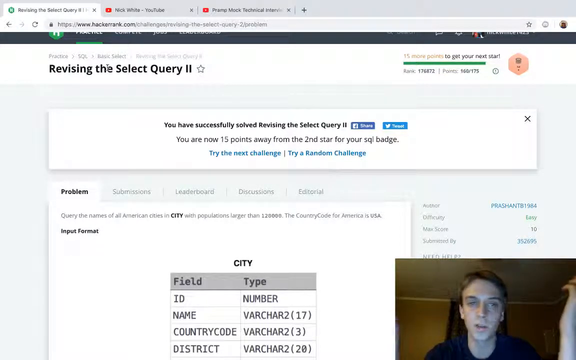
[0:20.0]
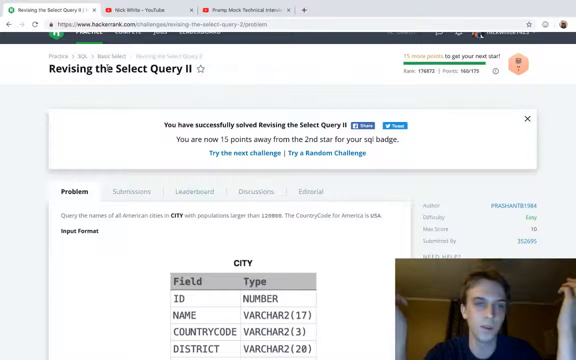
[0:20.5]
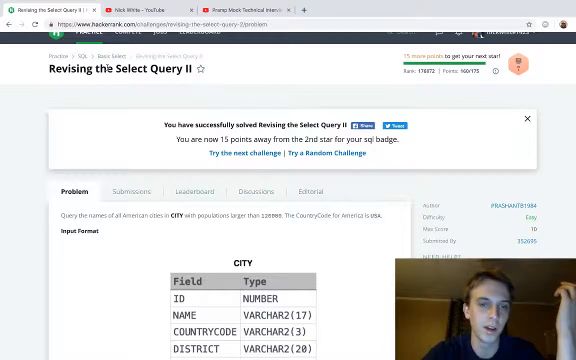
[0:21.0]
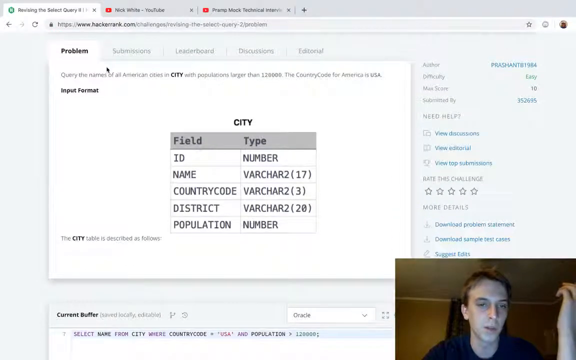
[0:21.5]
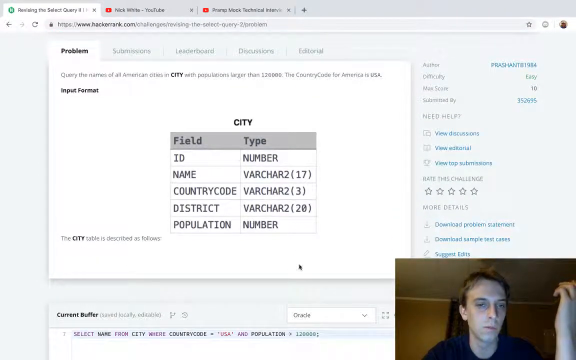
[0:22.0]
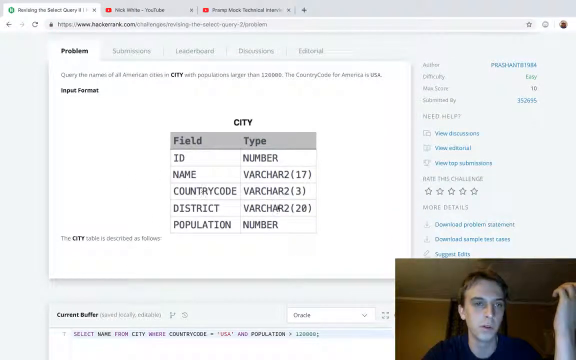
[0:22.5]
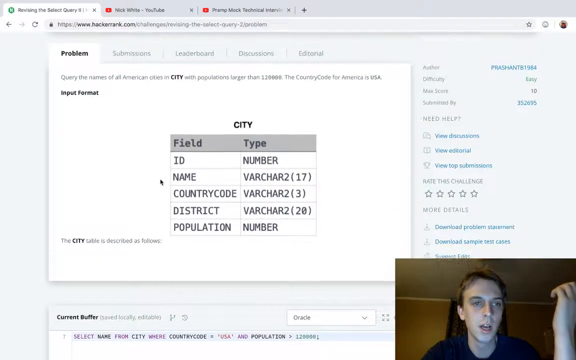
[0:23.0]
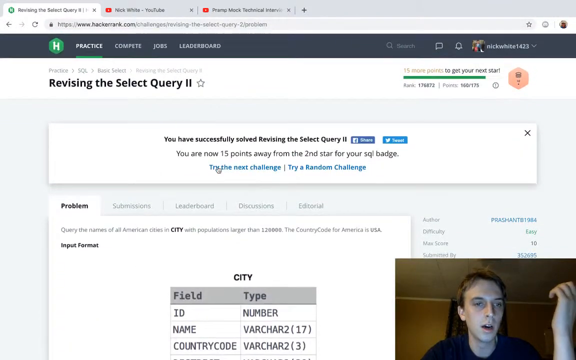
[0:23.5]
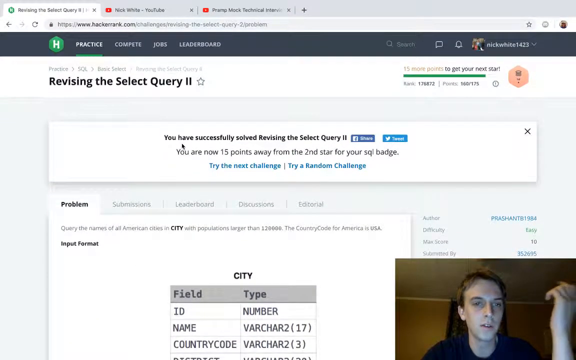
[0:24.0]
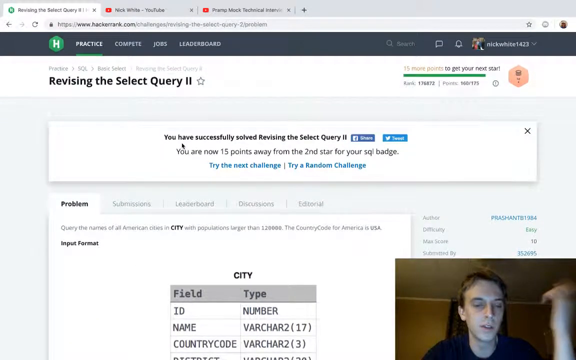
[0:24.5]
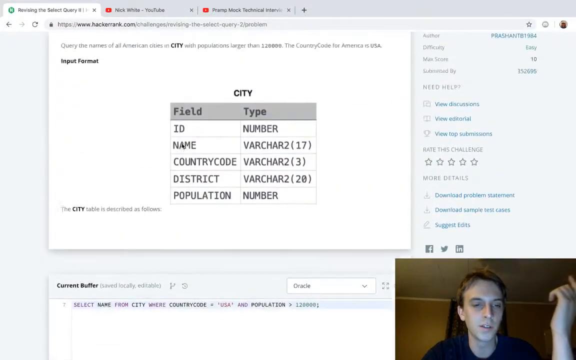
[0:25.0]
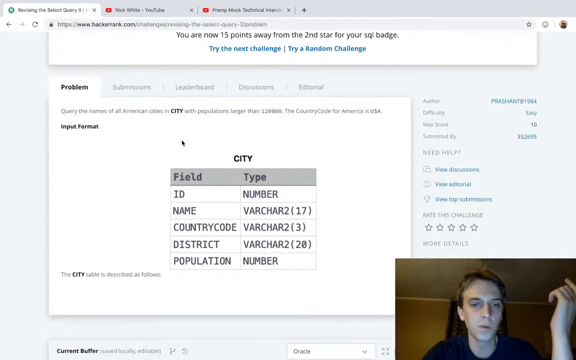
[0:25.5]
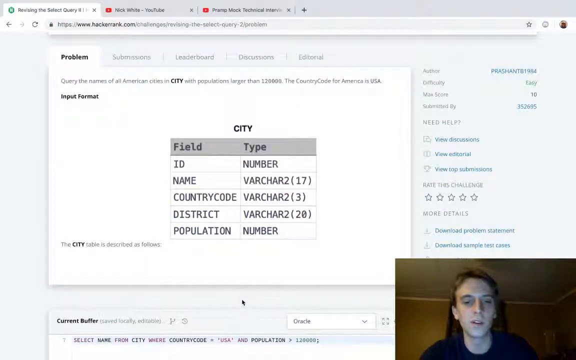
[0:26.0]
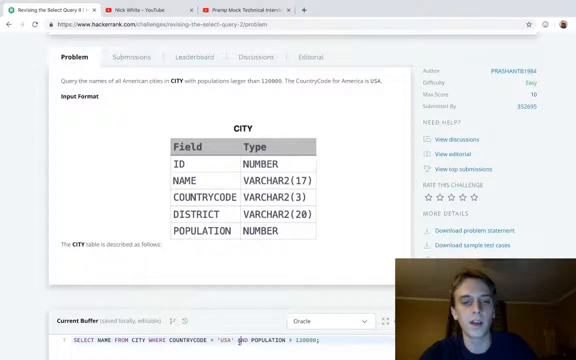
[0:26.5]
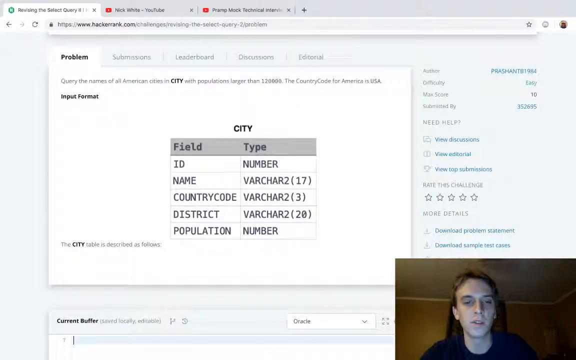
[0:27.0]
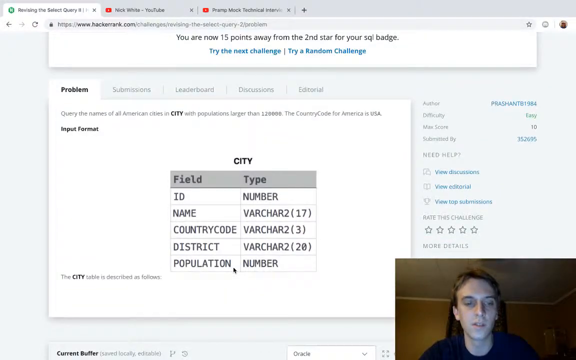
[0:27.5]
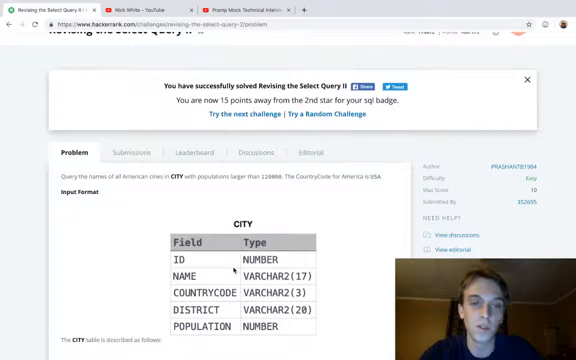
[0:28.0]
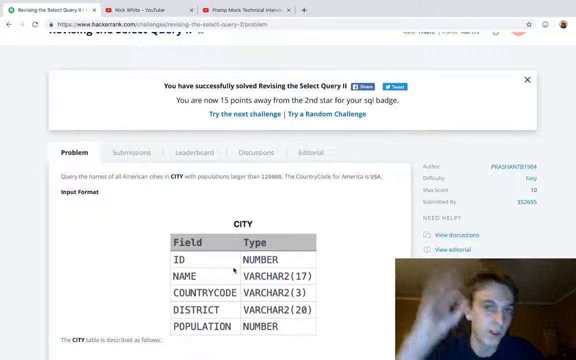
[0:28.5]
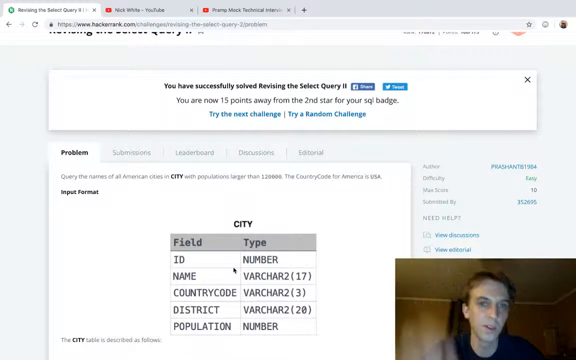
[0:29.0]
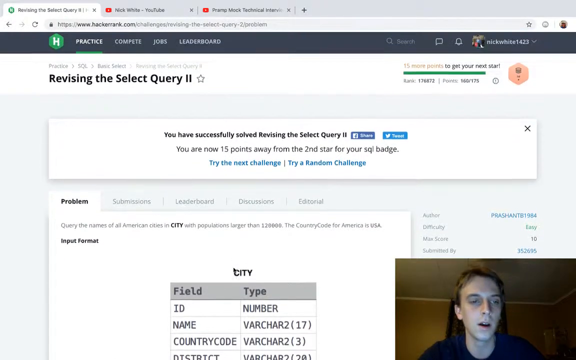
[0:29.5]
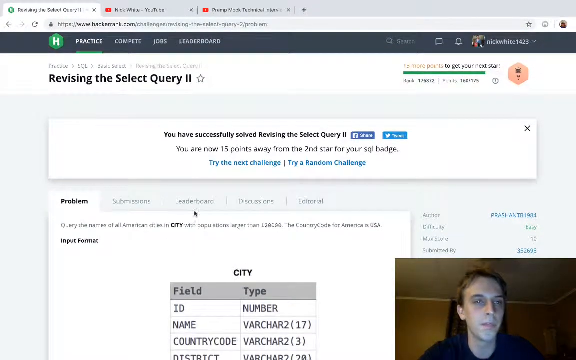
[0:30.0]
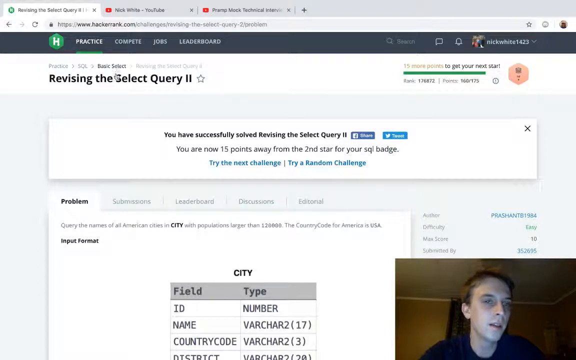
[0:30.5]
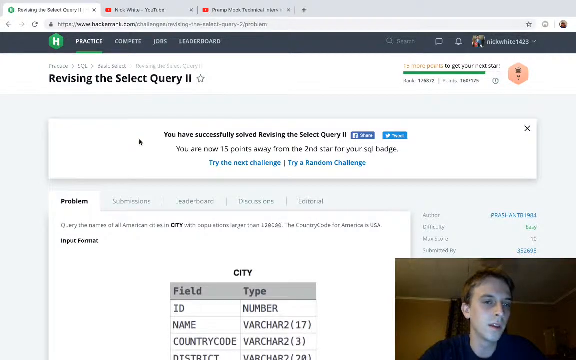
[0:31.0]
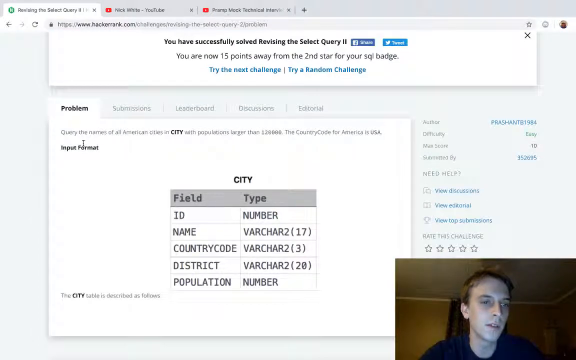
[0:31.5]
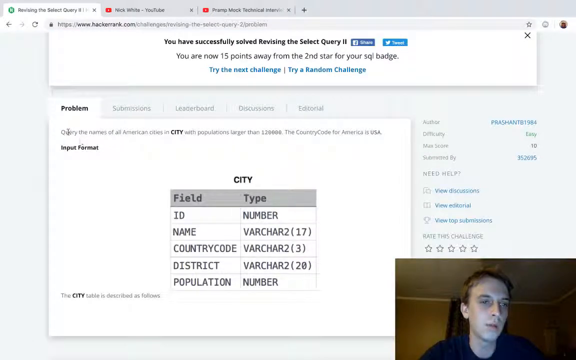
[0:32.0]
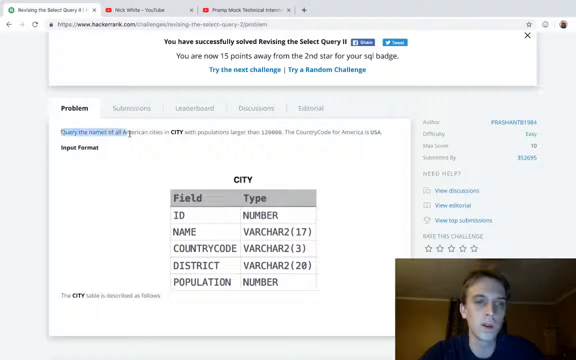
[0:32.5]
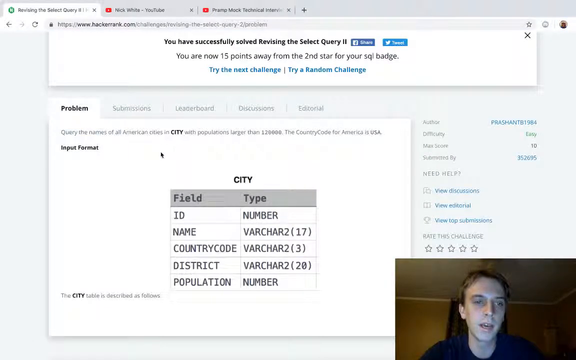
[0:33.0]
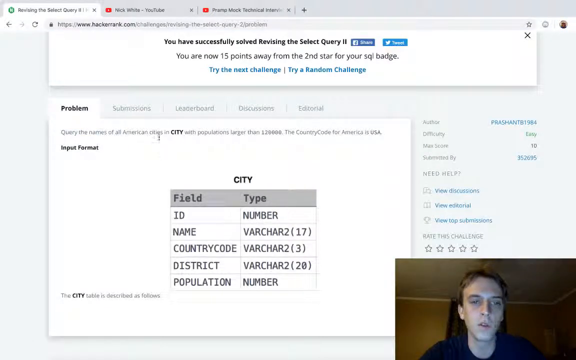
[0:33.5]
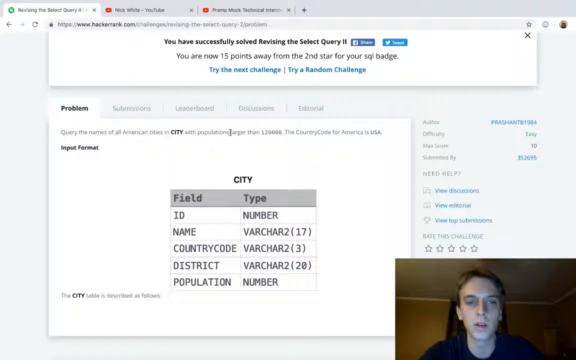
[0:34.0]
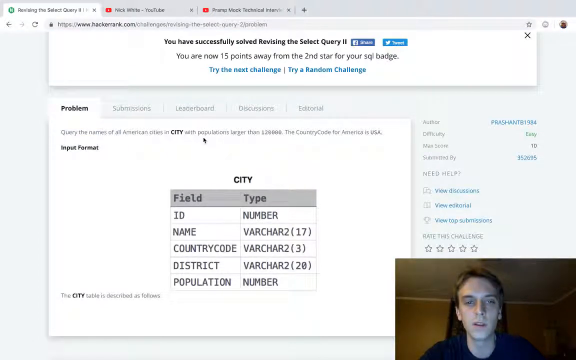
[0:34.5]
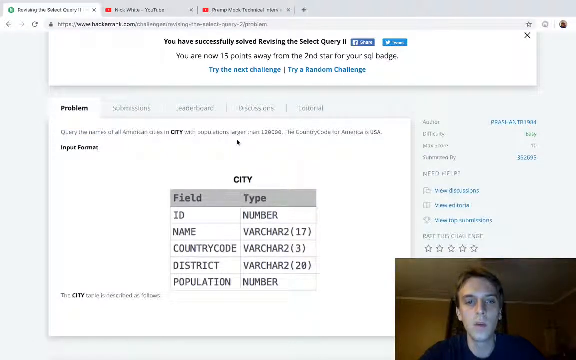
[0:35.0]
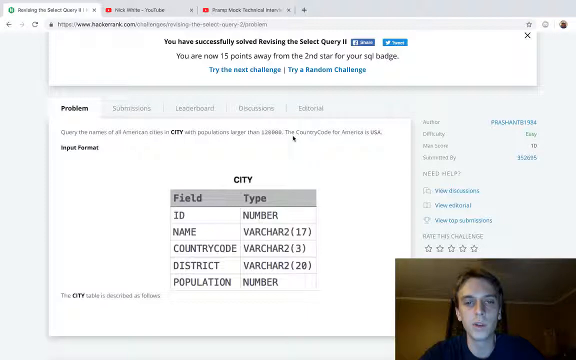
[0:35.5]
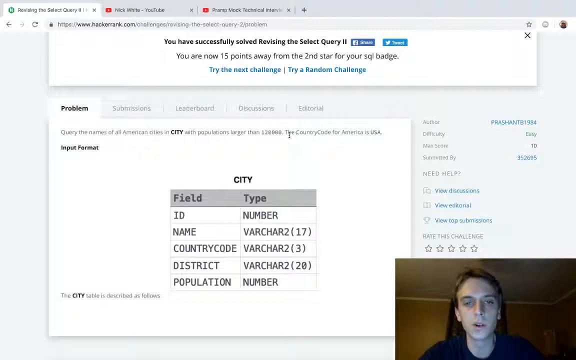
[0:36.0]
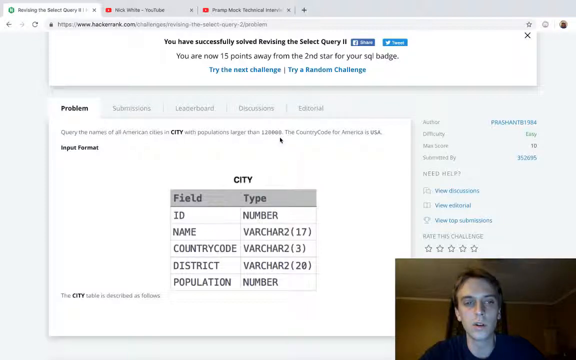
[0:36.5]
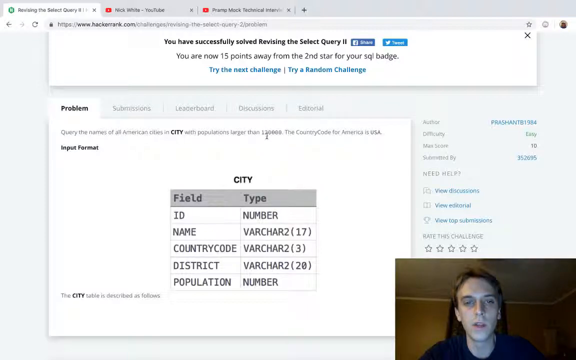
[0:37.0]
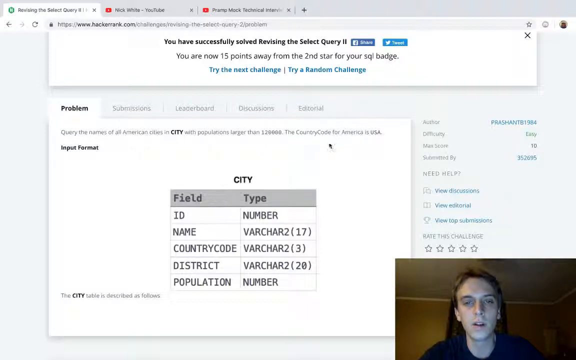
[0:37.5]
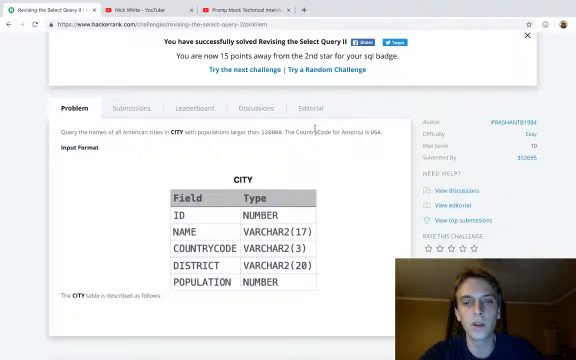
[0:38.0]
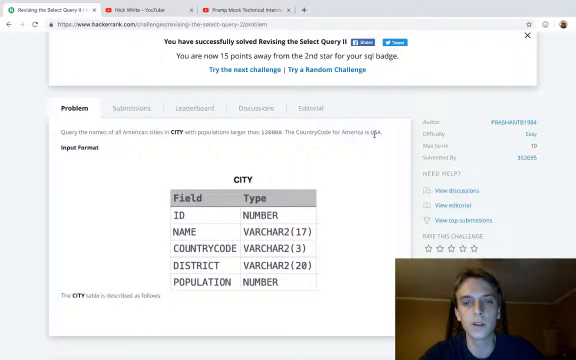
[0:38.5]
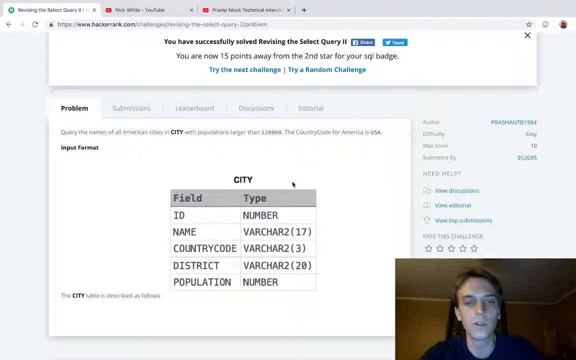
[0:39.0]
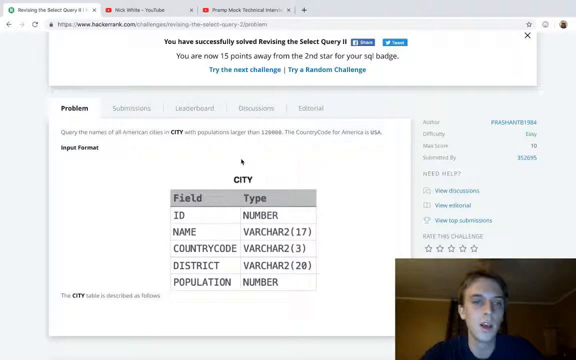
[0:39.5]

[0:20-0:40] The man scrolls down and then up and down the page, which shows district and population, talking over it. He highlights some things and moves his mouse cursor over sections of the page. Hyperlinks are visible on the right-hand side; the tabs are unclear and the font is quite small. He seems a little frustrated and talks with his hands.